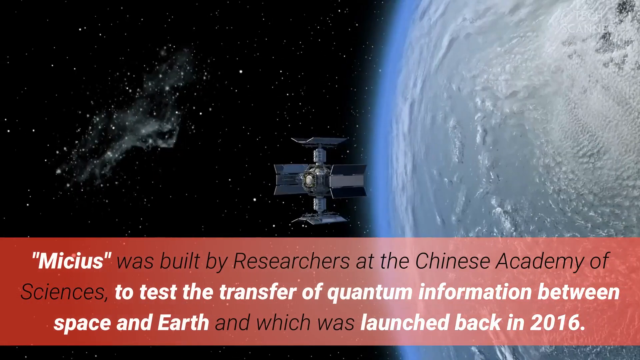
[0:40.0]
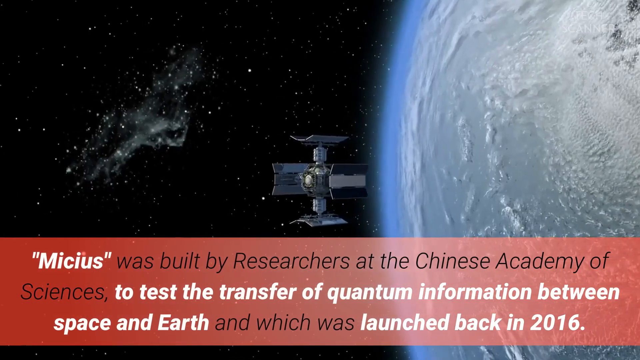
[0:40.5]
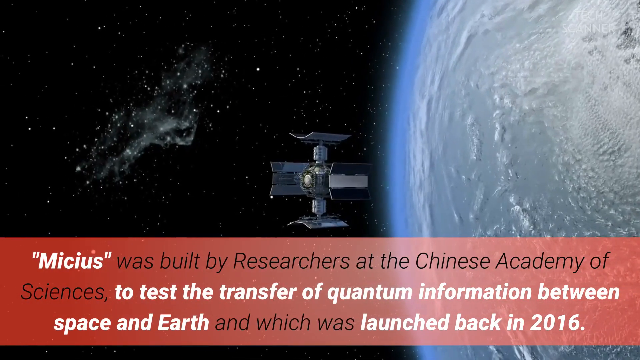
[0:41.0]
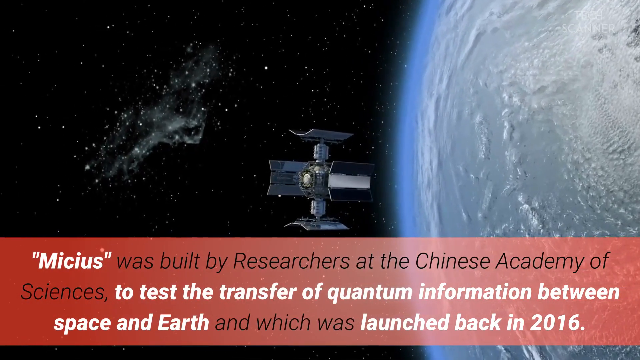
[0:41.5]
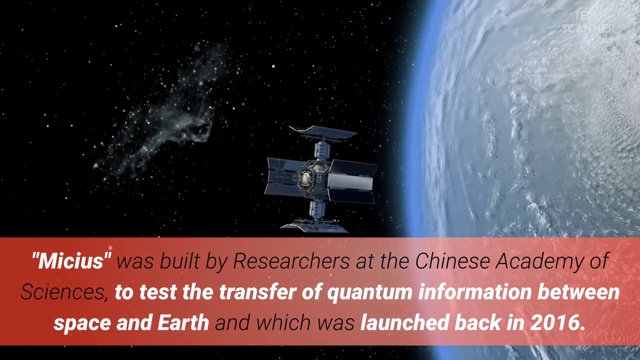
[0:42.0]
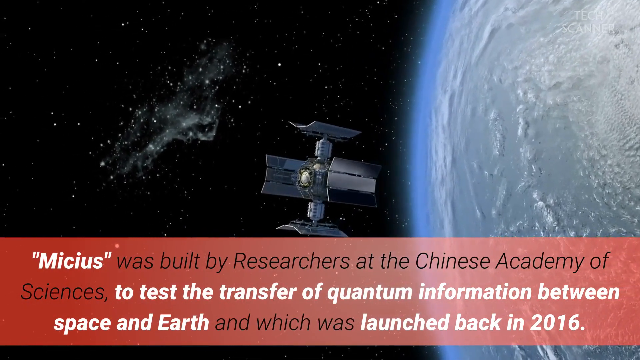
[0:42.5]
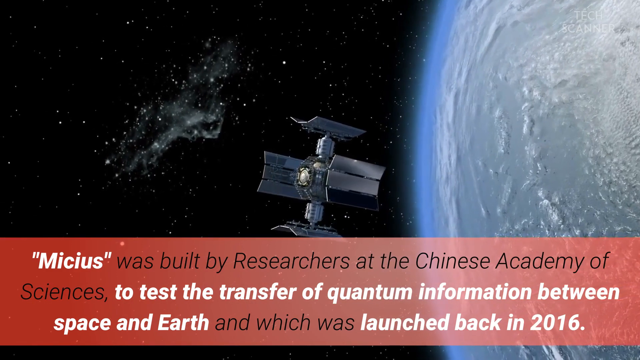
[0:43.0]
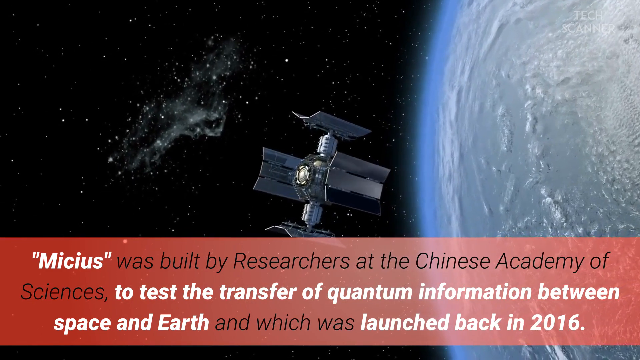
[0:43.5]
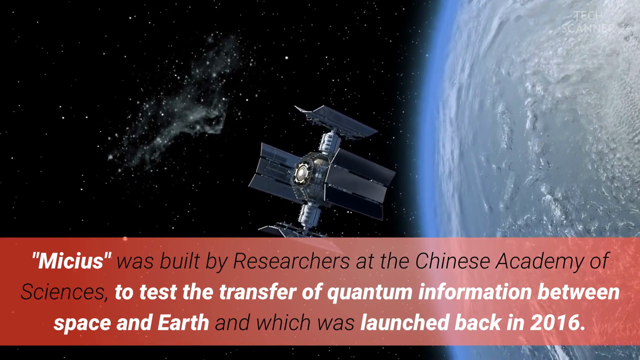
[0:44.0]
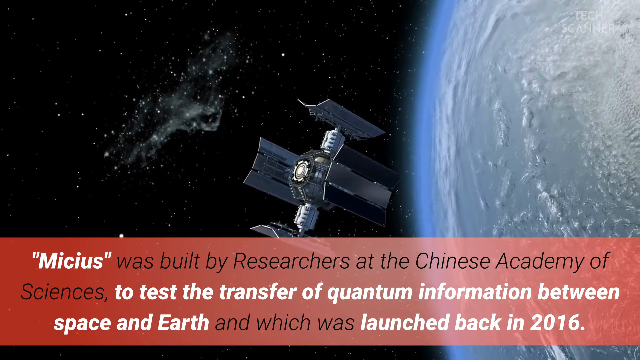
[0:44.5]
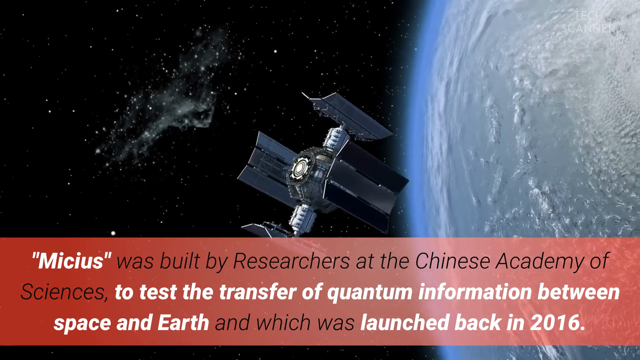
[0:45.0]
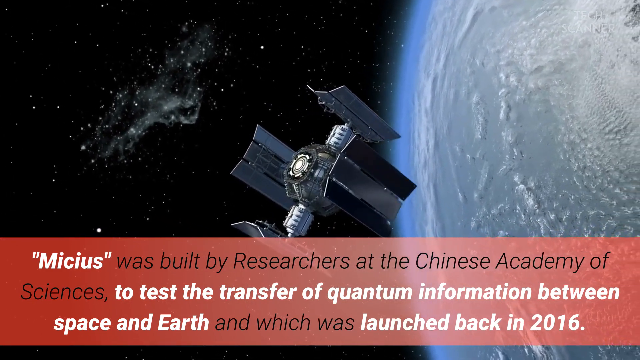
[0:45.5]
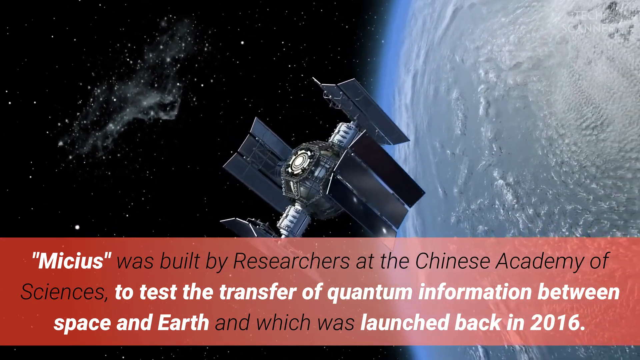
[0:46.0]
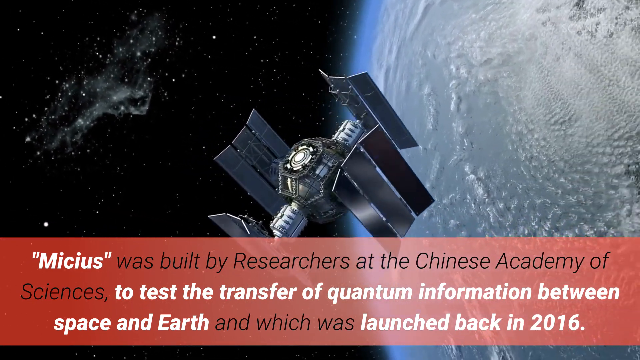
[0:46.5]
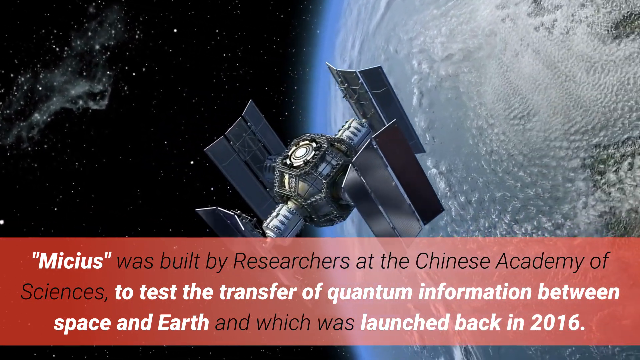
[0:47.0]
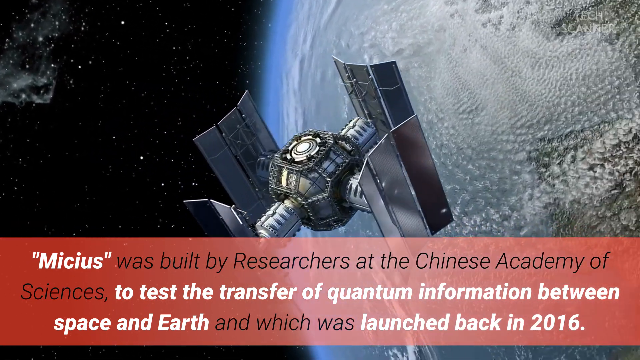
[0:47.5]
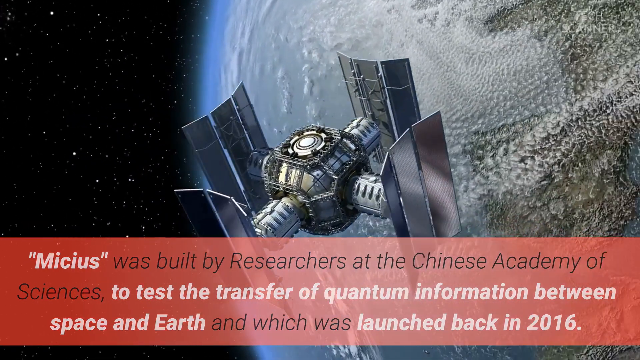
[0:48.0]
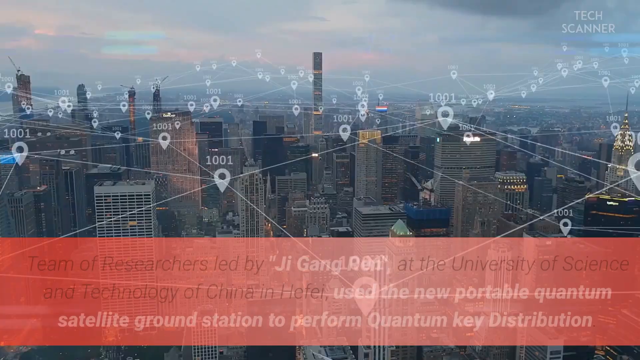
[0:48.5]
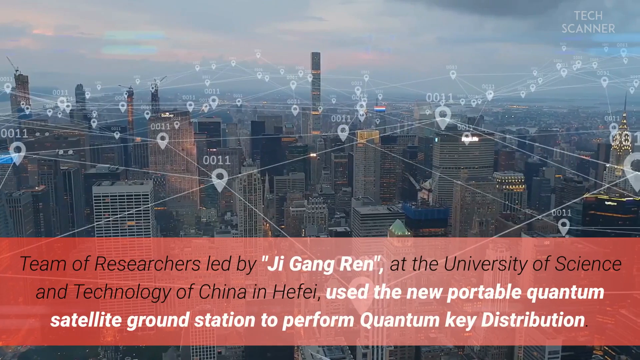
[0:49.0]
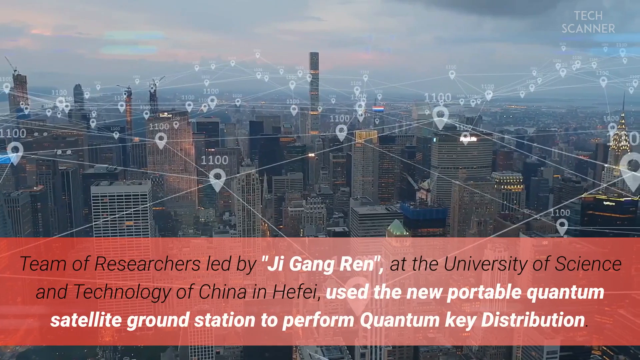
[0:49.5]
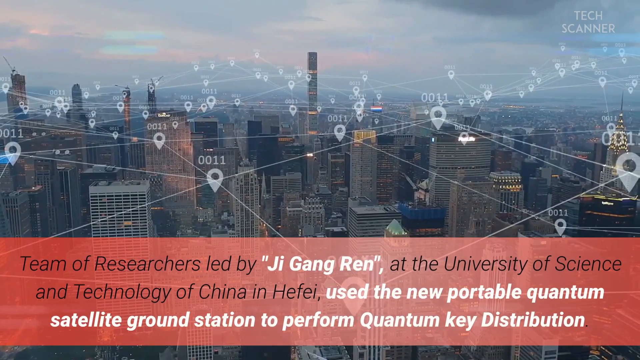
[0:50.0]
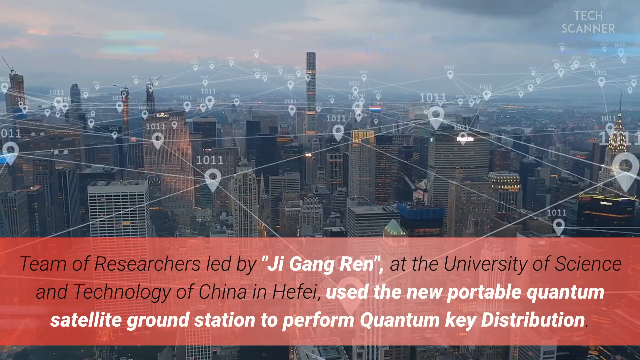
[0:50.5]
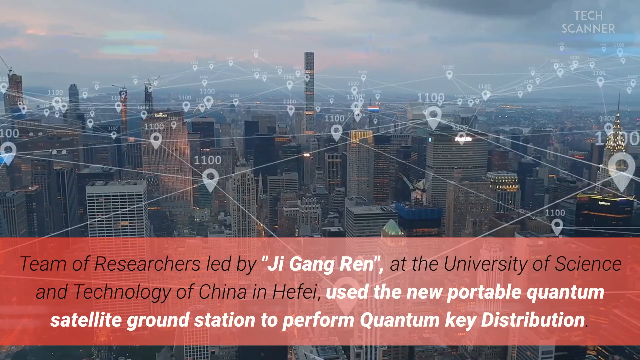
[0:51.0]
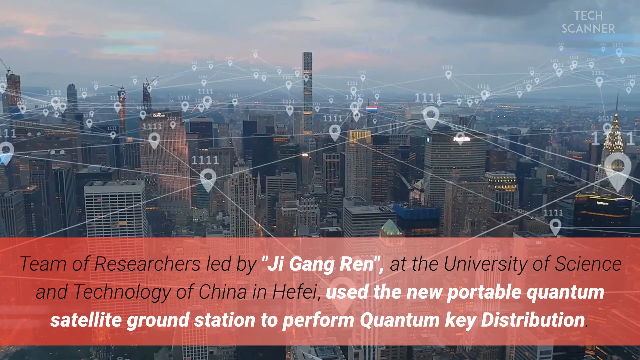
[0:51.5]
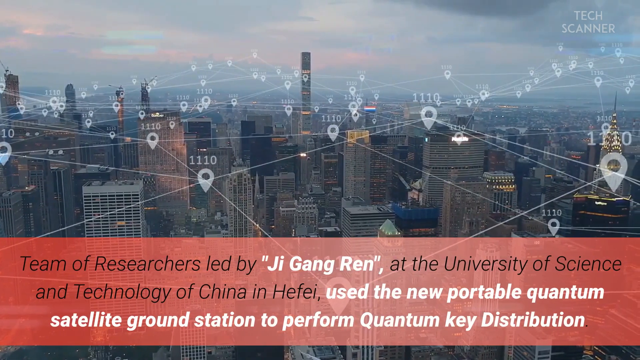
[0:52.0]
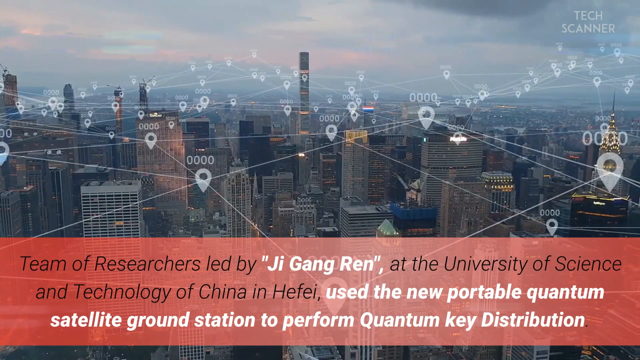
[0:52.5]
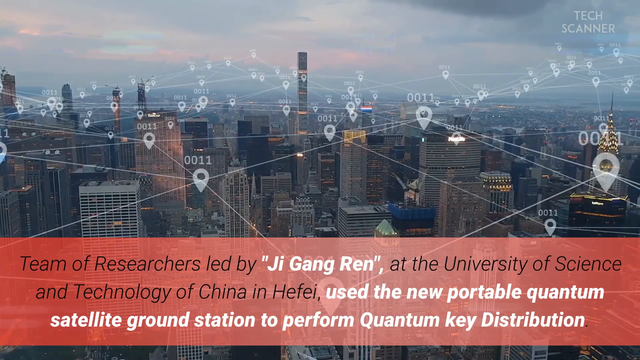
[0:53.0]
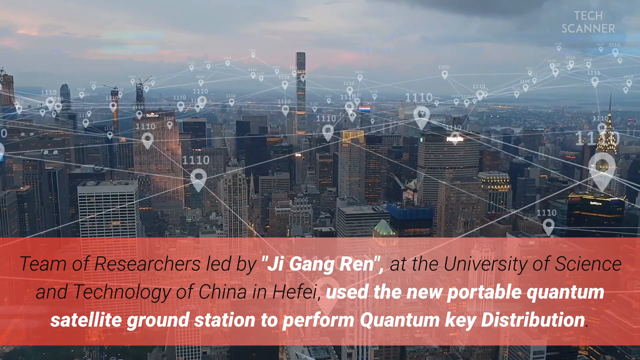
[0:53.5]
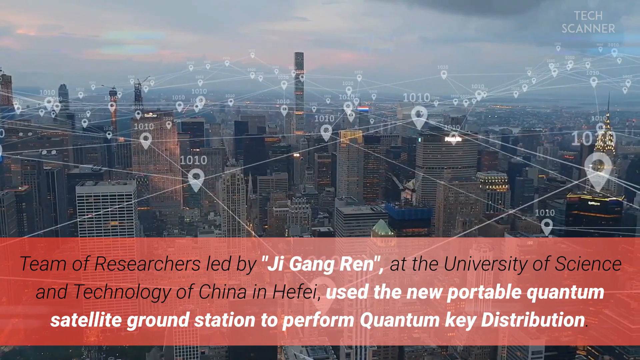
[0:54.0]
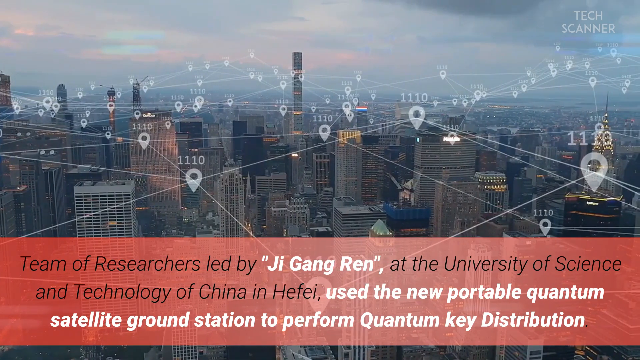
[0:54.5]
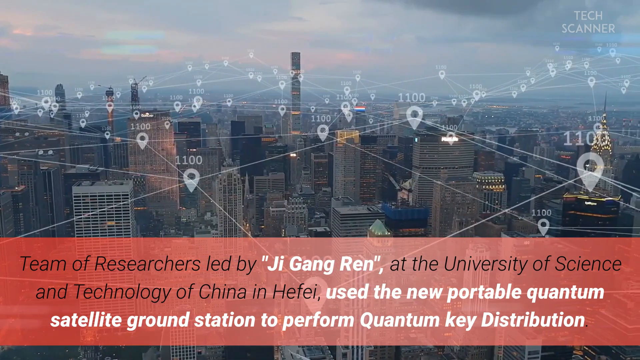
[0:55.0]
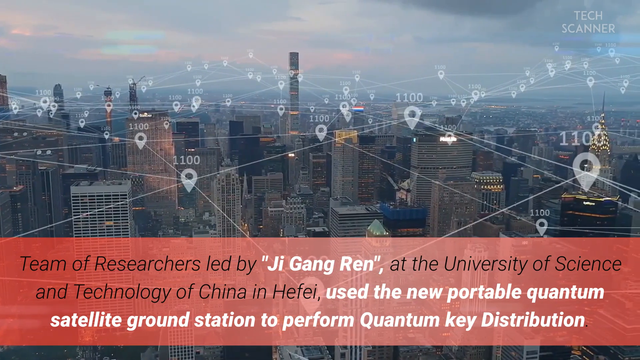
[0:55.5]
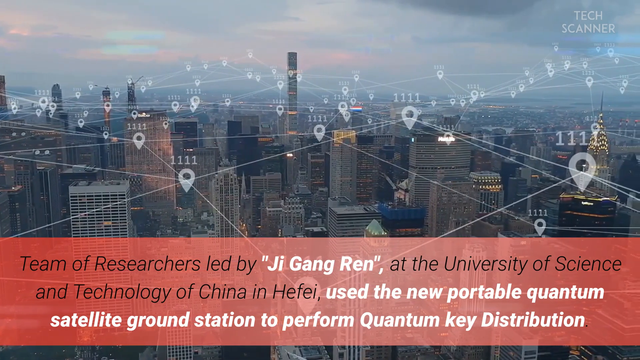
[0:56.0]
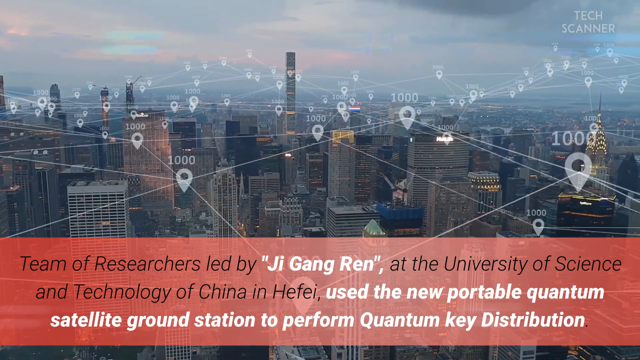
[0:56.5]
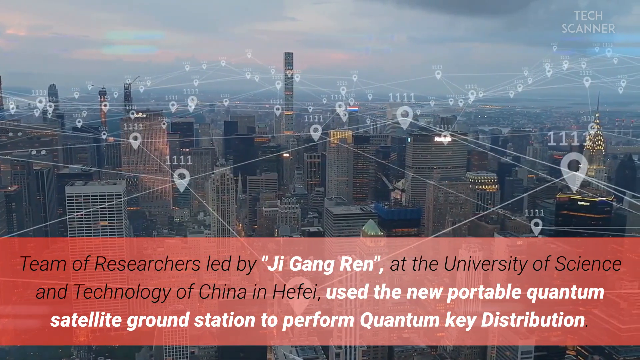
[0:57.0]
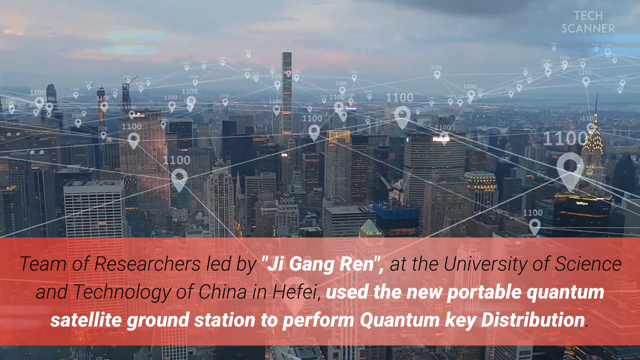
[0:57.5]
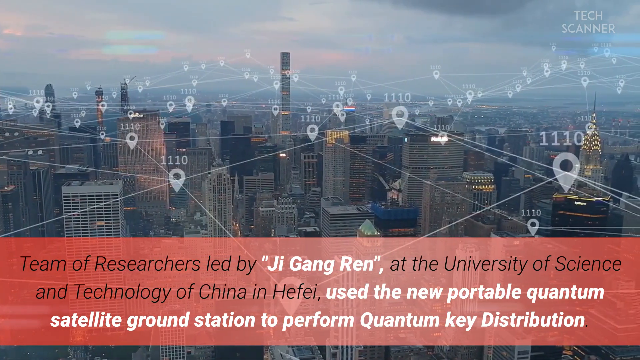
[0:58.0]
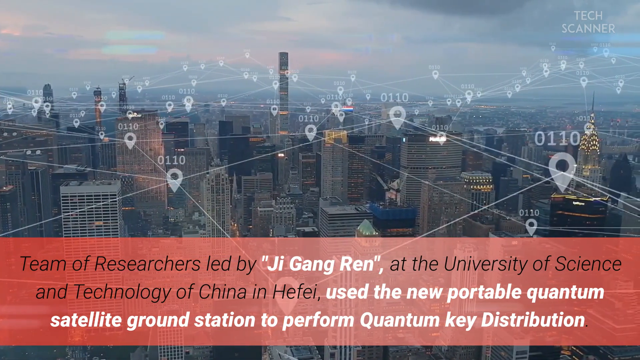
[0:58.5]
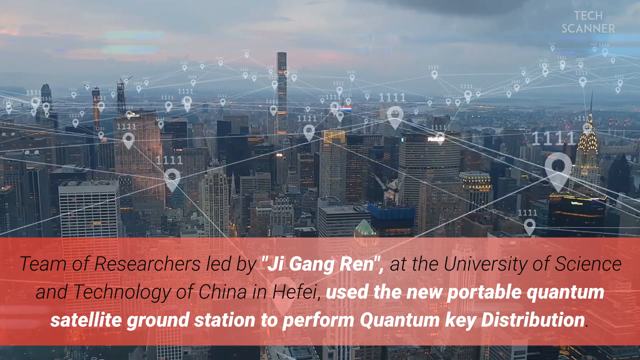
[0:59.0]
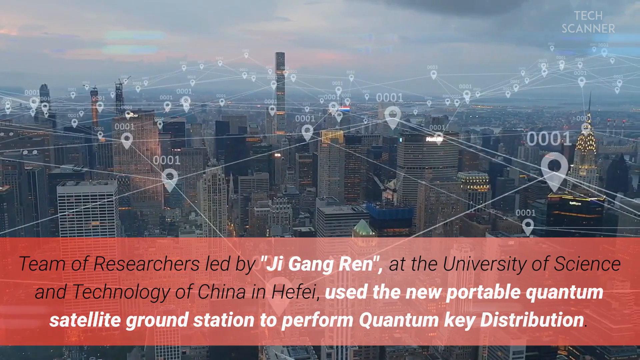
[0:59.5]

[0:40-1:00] The red box reads "MICIS" in quotation marks, followed by "was built by researchers at the Chinese Academy of Sciences, to test the transfer of quantum information between space and Earth, and which was launched back in 2016." As this text runs across the bottom of the screen, the satellite comes out and moves toward the left. The scene then shows a cityscape that looks like a very big, busy city, possibly New York, seen in a kind of aerial view over the tops of the buildings. Connected white lines run all the way across it, with little map-style marker symbols, each labeled with 111s. The red box at the bottom then reads "team of researchers led by Ji Gangren at the University of Science and Technology of China and Hefei used the new portable quantum satellite ground station to perform quantum key distribution." The camera slowly scrolls across the cityscape.